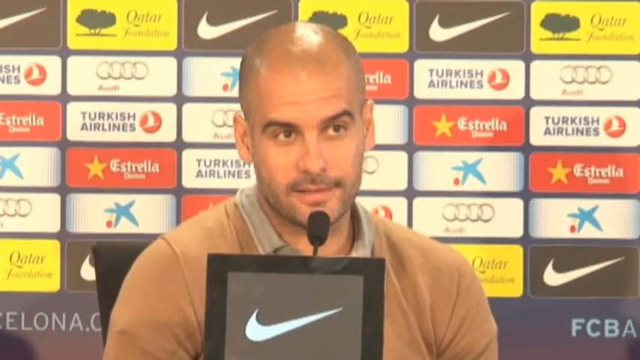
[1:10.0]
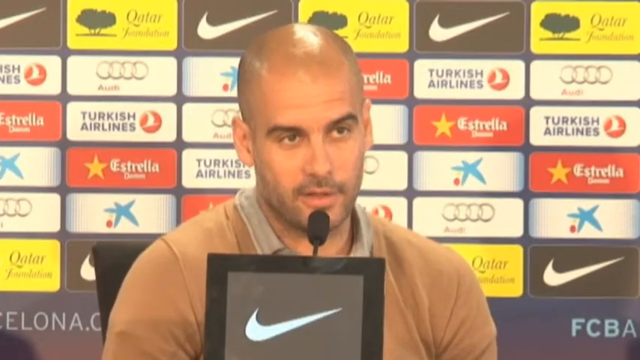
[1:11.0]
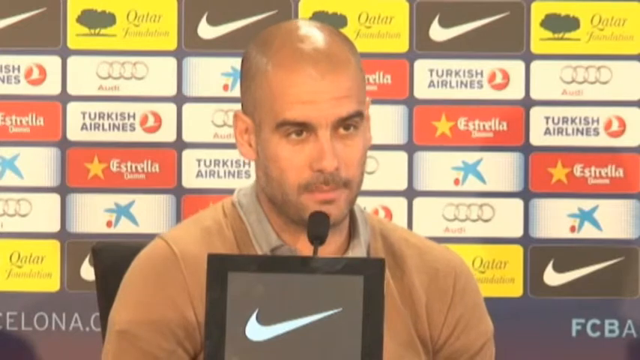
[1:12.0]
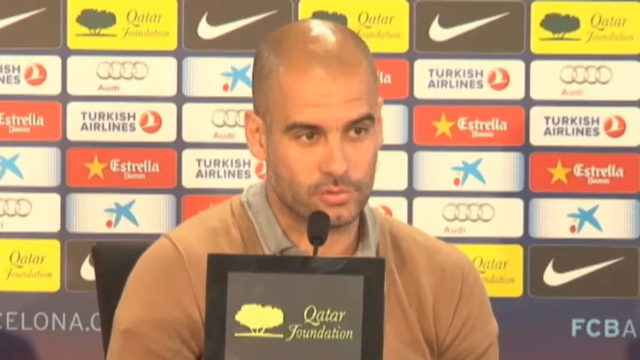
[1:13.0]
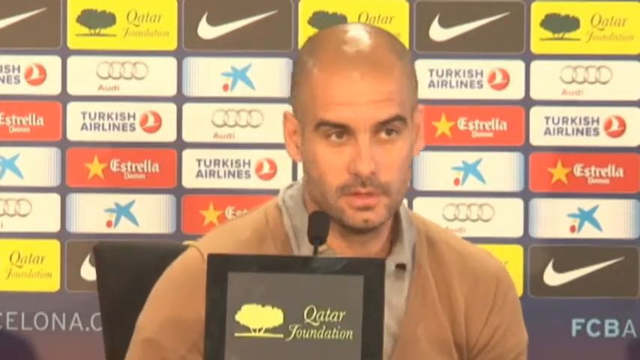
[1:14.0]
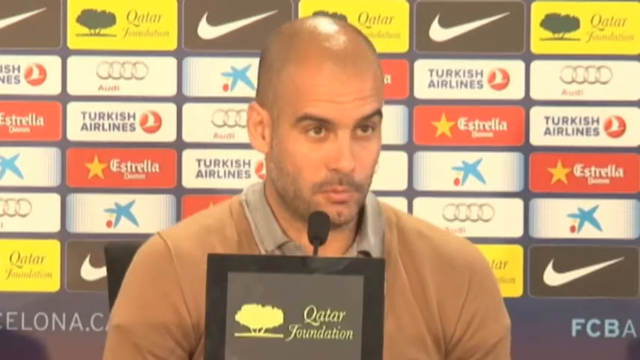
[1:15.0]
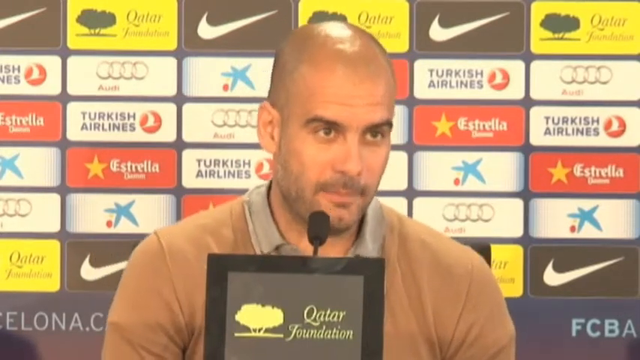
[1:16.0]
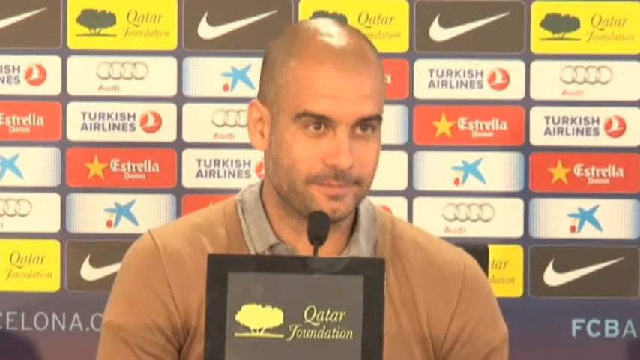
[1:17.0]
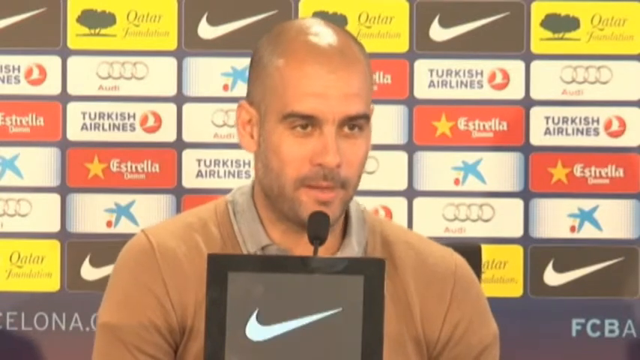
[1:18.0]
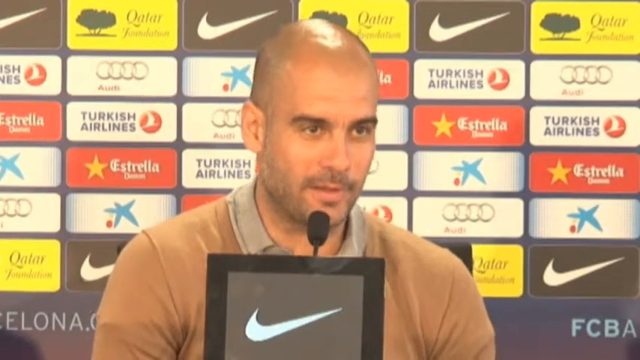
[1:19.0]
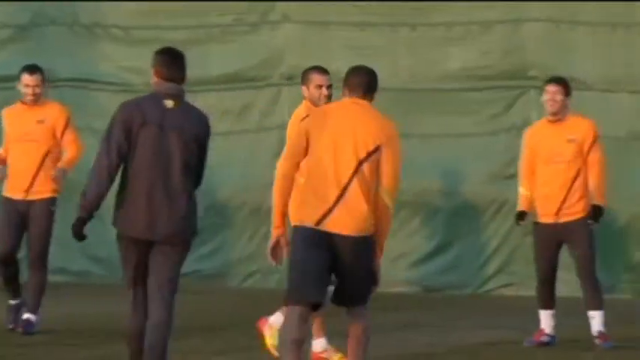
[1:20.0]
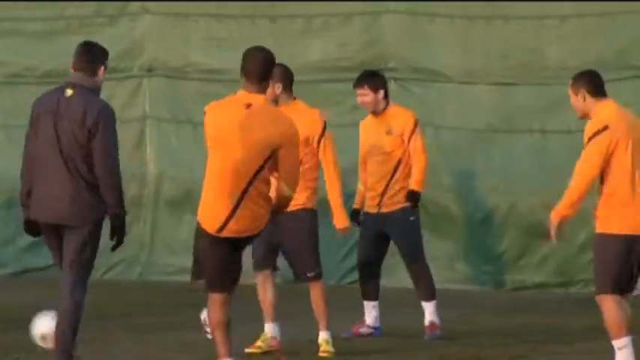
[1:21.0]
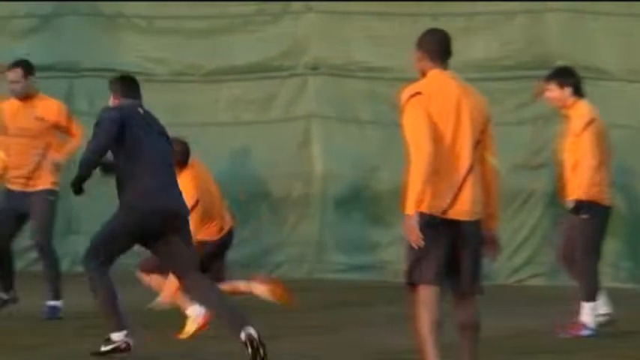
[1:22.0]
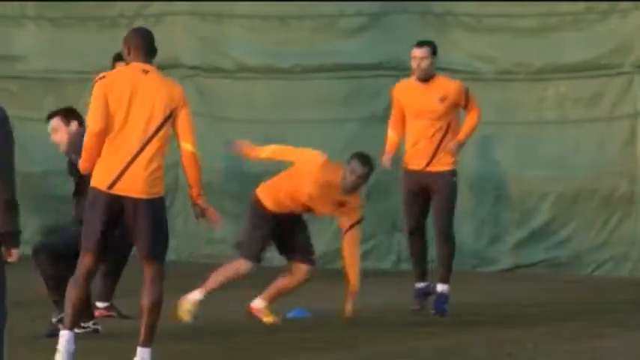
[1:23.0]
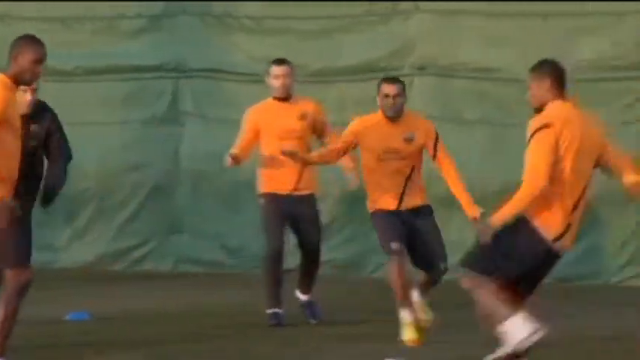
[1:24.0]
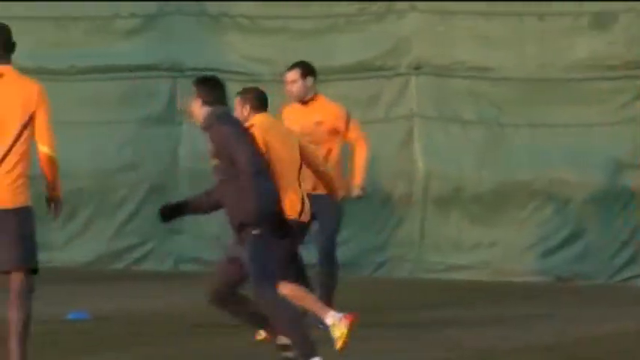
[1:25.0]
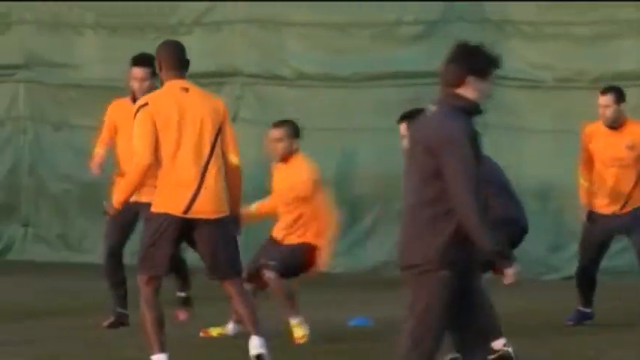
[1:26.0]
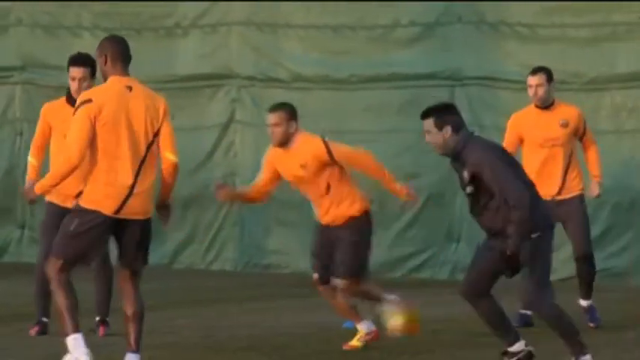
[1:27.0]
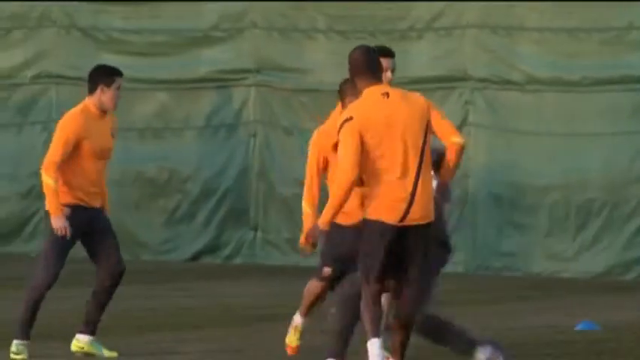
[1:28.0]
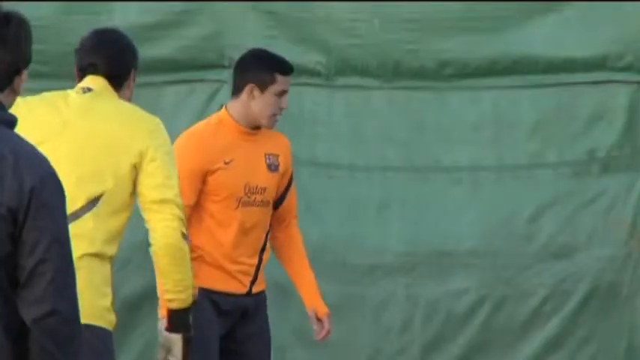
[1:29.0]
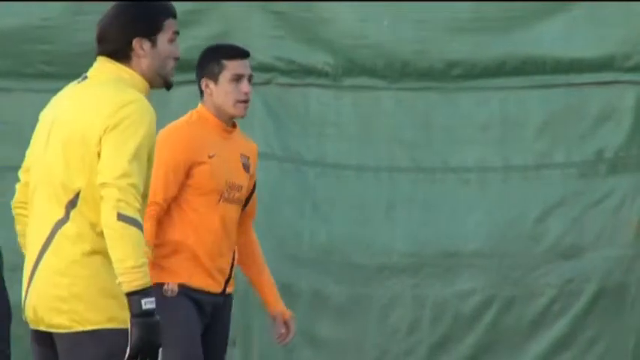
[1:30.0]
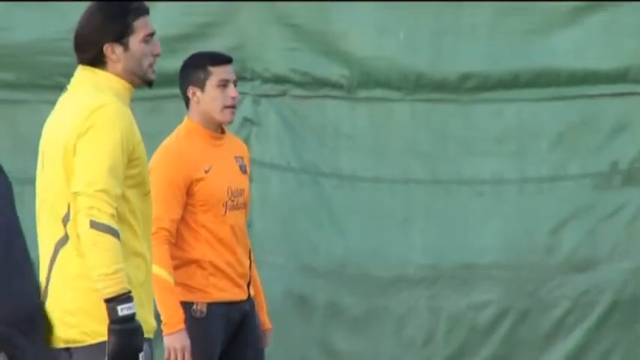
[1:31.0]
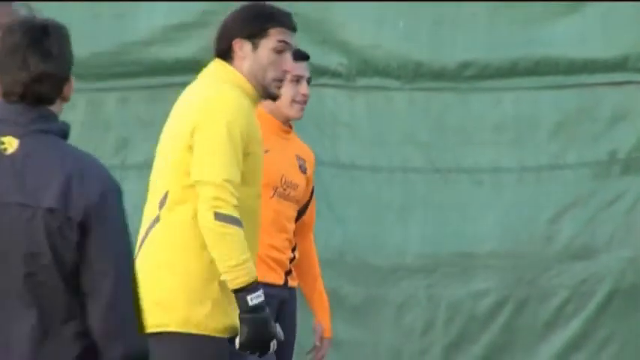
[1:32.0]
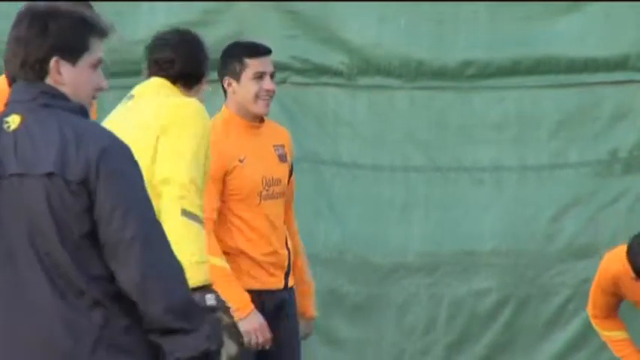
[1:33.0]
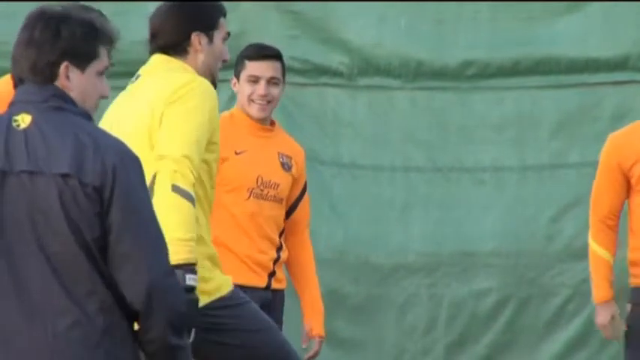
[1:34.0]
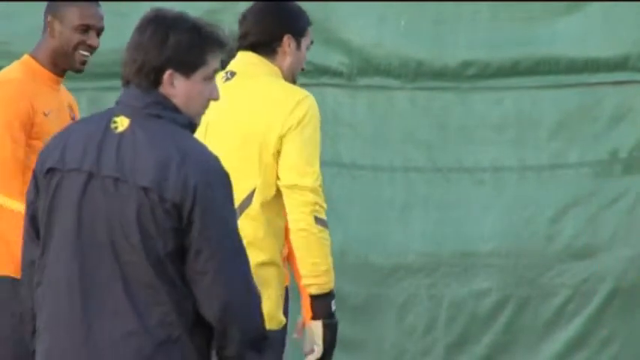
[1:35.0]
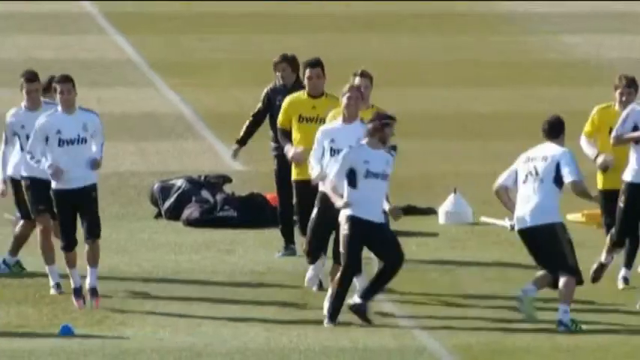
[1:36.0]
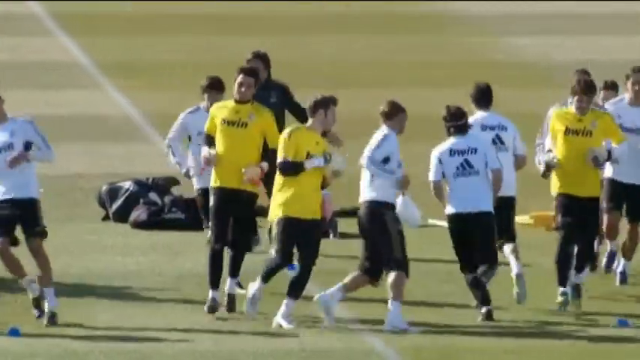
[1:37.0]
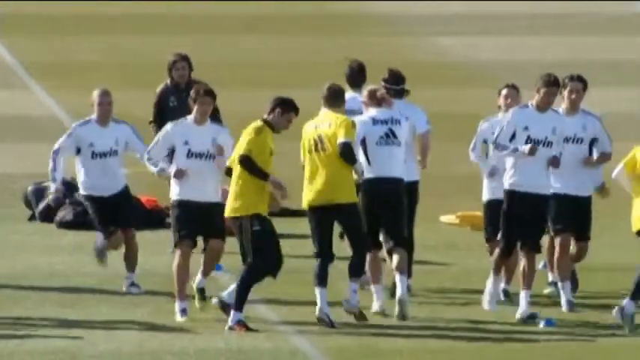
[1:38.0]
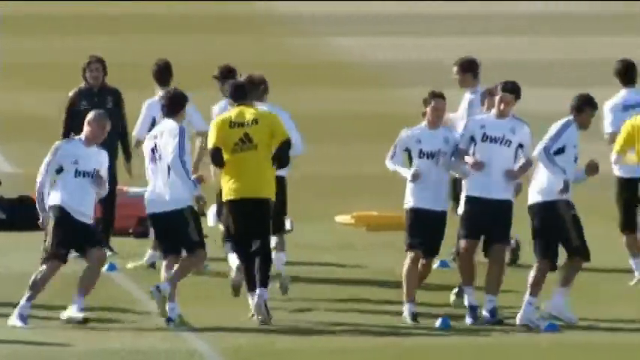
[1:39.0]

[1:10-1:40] Pep Guardiola continues speaking to the media in front of the sponsor logos in the background. He seems very calm. He is seen from just below the shoulders up, his arms by his sides under the table as he swivels gently in the black office chair. The video cuts back to FC Barcelona's players at practice, most wearing orange long-sleeve jerseys with a diagonal stripe running from under the right armpit down to the bottom left of the shirt. Another player is in an all-black outfit, potentially a coach, and is even wearing mitts. The drill is very boisterous, with the players trying very hard to keep the ball away from a certain player. At the end of this part, a close-up of one of the orange jerseys shows a Nike swoosh logo on the upper right chest and the sponsor Qatar Foundations in a scripted font on the front.